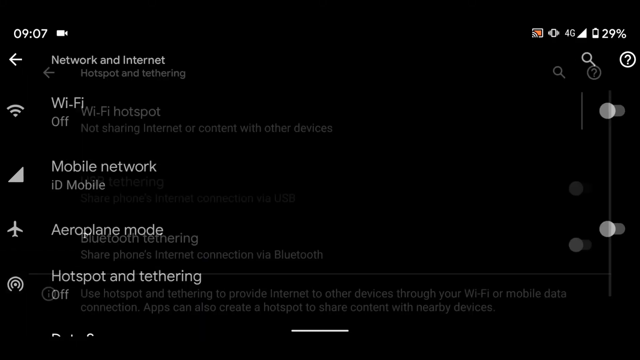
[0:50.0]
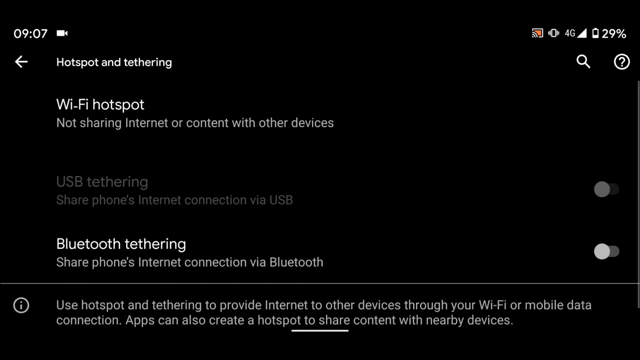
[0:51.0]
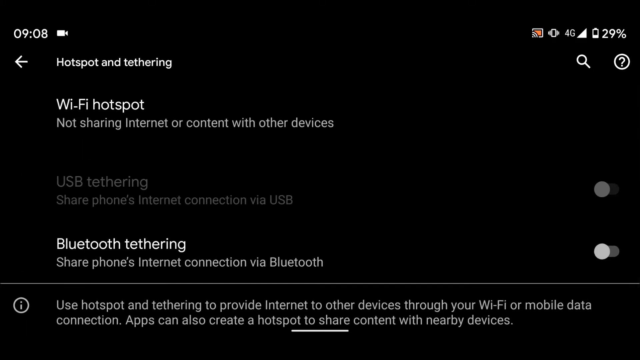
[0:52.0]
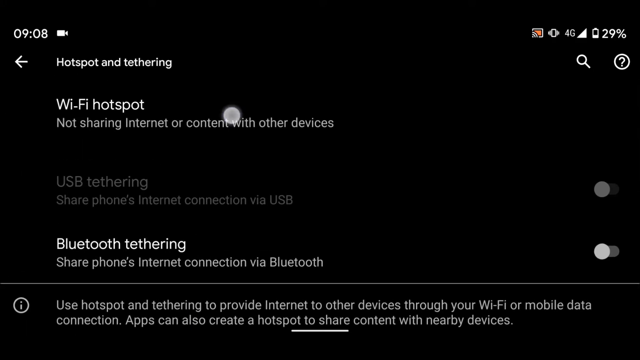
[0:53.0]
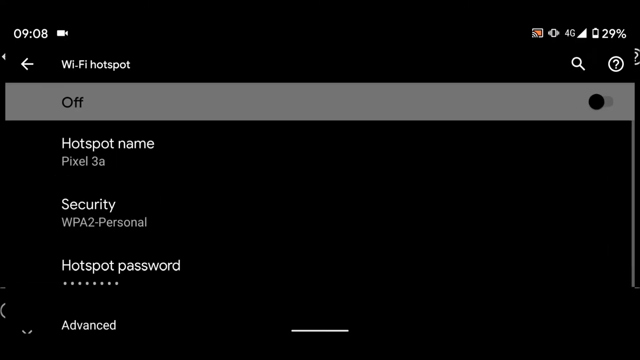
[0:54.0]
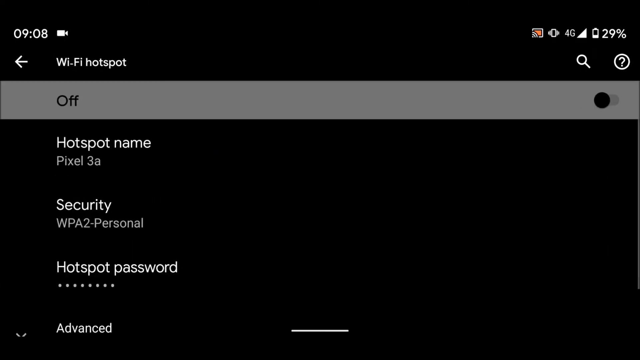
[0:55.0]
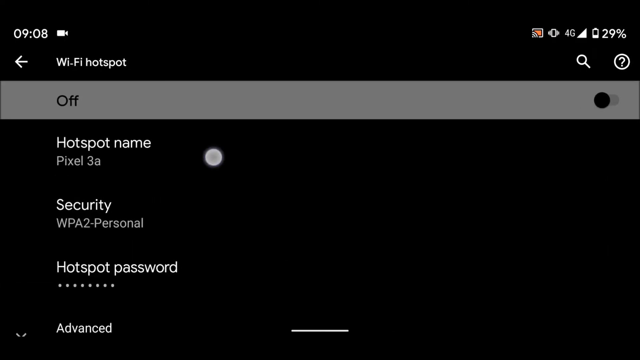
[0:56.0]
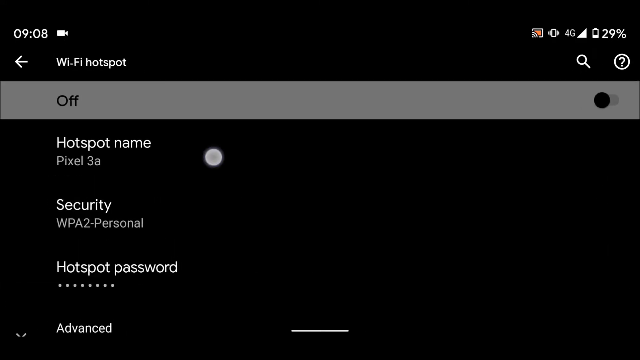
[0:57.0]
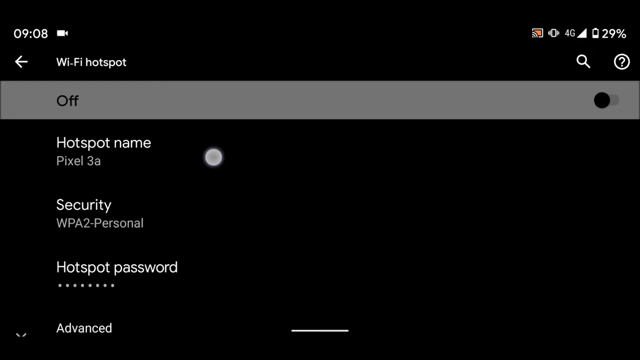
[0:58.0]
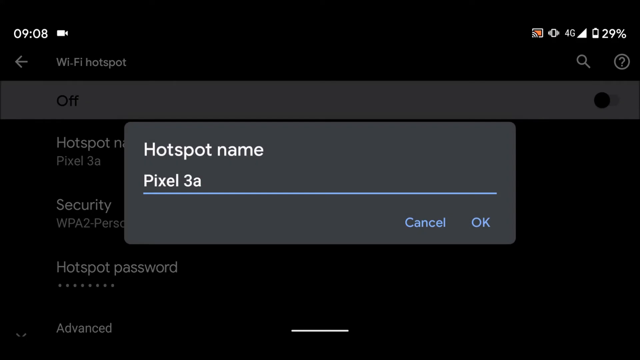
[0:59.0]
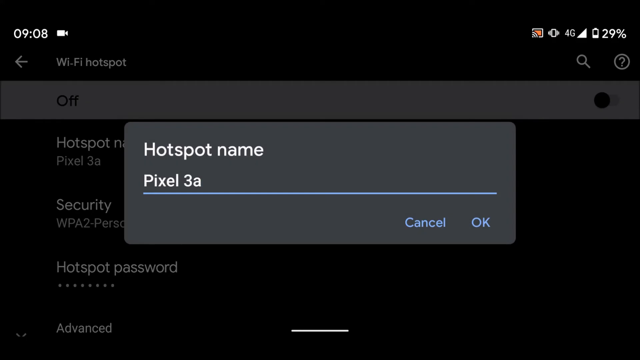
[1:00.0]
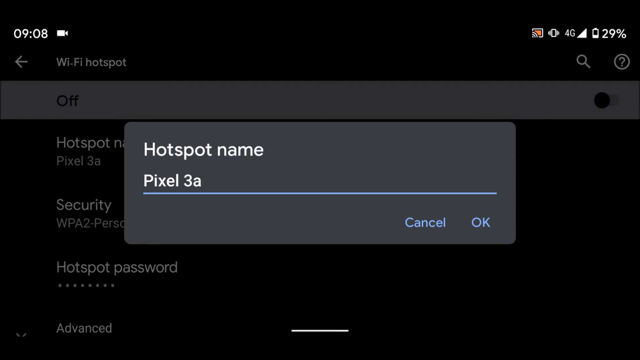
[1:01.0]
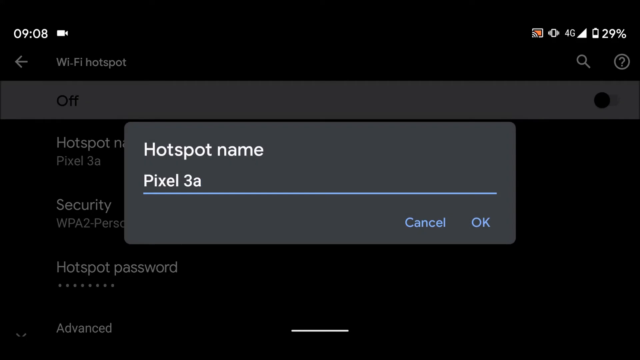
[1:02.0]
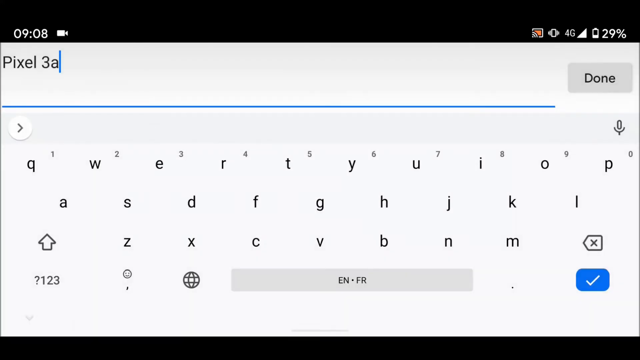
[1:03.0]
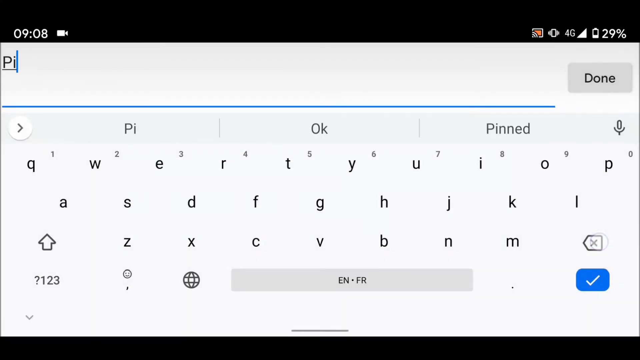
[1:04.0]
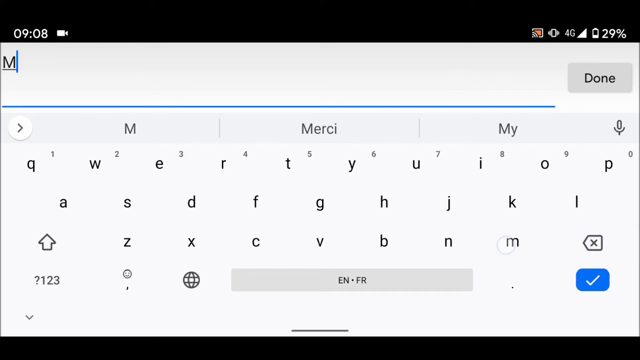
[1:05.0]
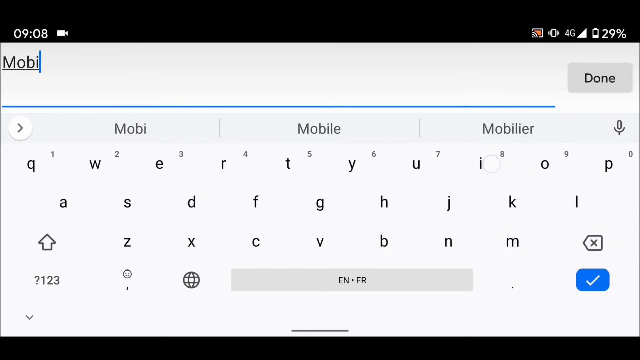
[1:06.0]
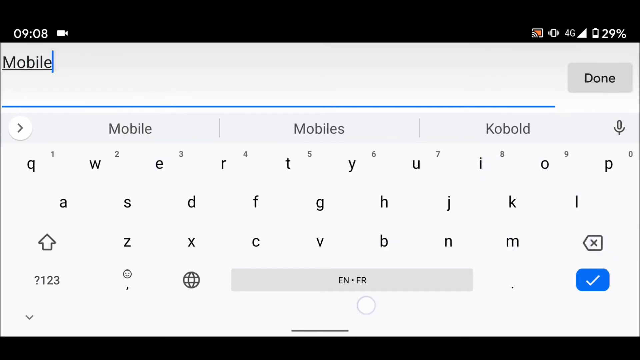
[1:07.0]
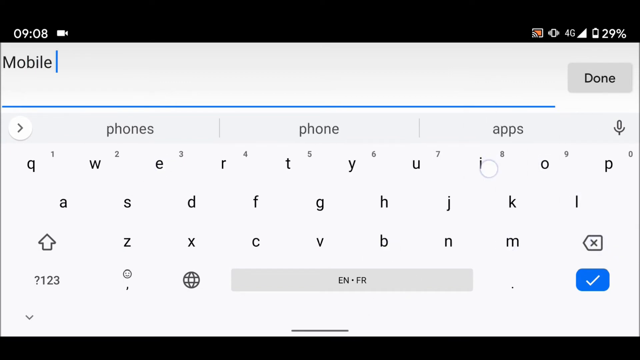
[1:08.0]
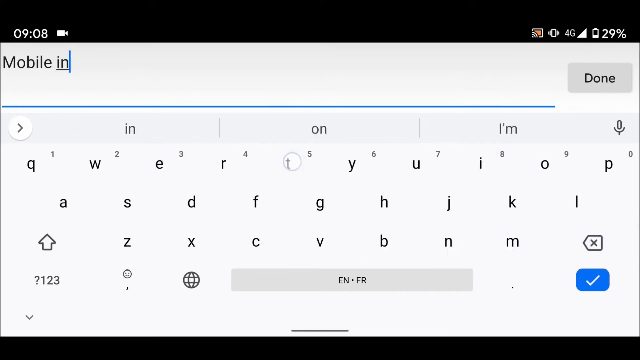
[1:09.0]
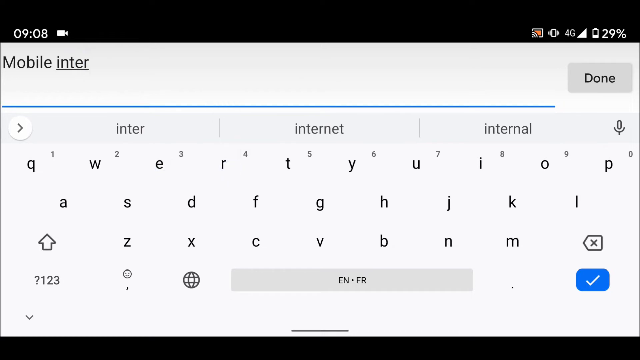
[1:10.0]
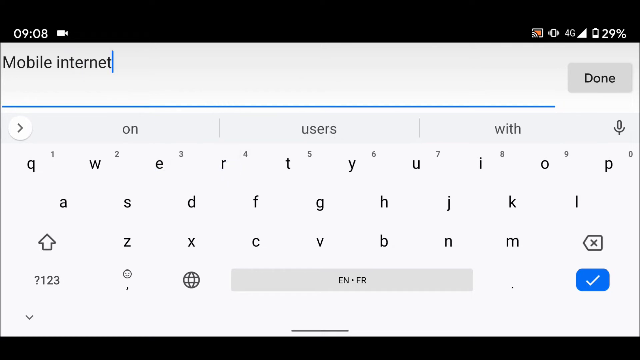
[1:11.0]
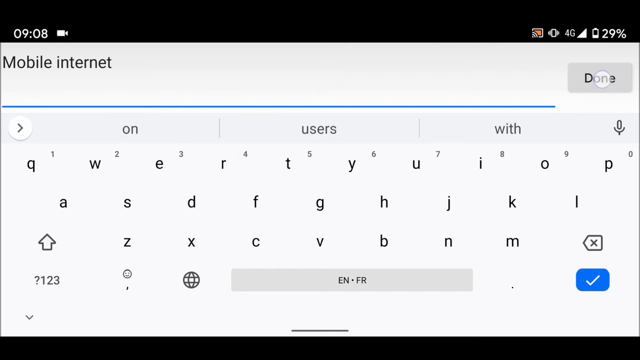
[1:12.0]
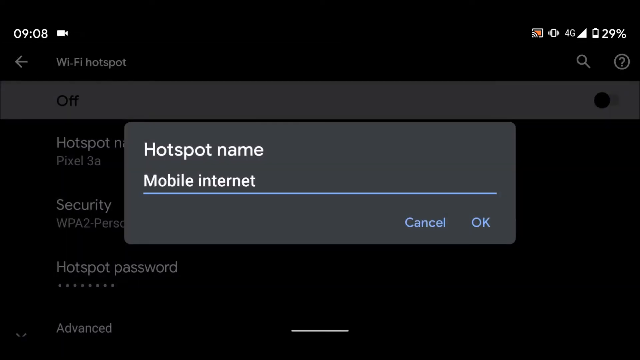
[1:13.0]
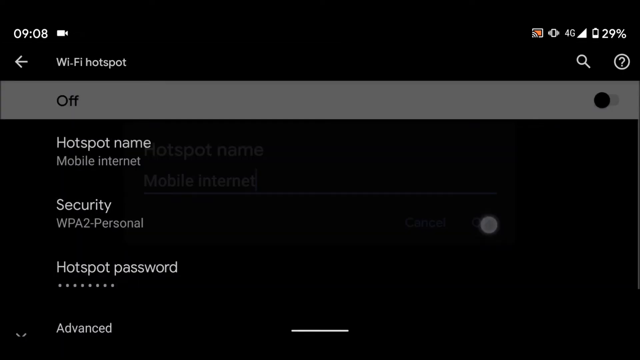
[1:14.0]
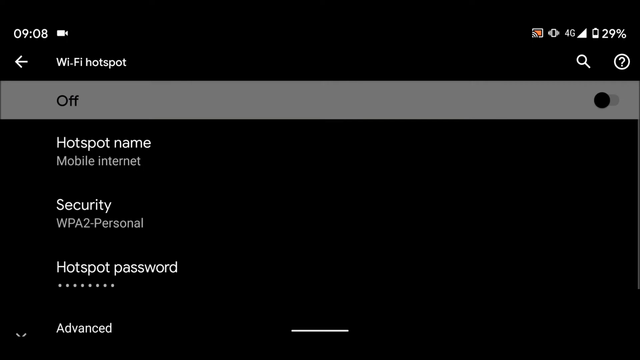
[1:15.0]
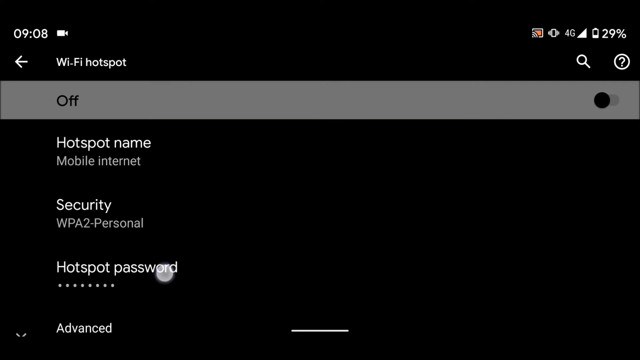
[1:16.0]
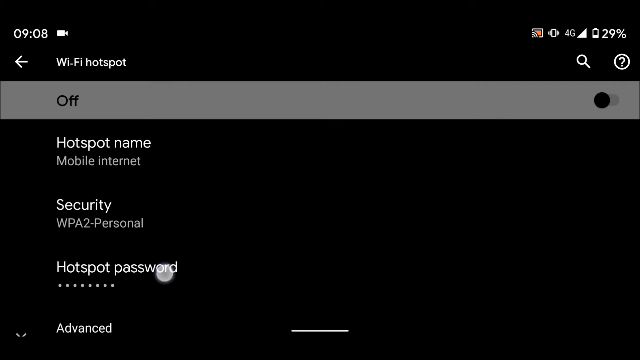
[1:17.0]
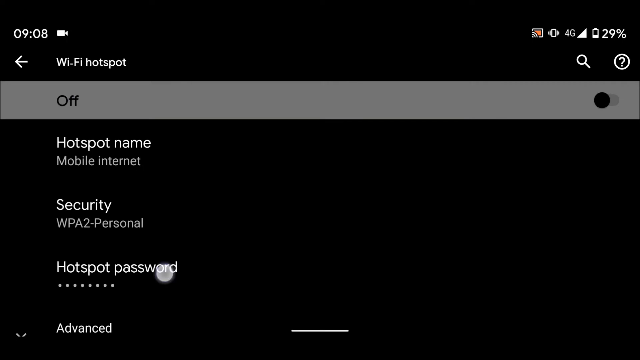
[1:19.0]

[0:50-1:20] What appears to be a cell phone menu shows the heading "hotspot and tethering" at the top, with an arrow pointing left to its left, all in white text. Above it the time reads "9.07", with a little white camera next to it. Under the heading is "wi-fi hotspot" in white, and beneath that, in light gray, "not sharing internet or content with other devices". The screen then navigates to another screen reading "wi-fi hotspot"; beneath it, an area highlighted in gray reads "off", and to its right is a black button toggled to the left.